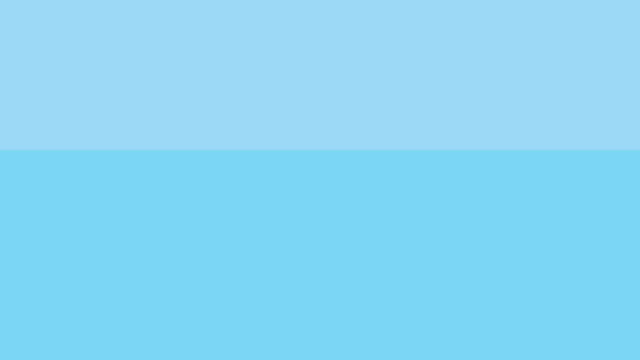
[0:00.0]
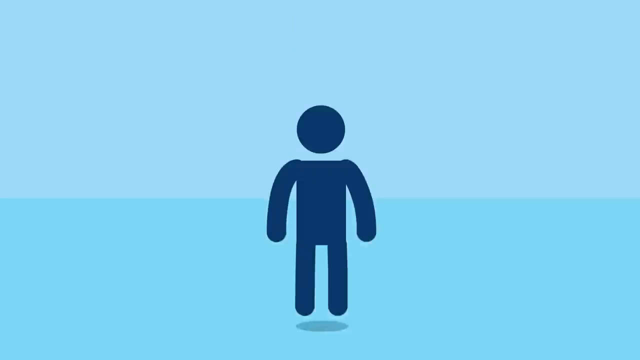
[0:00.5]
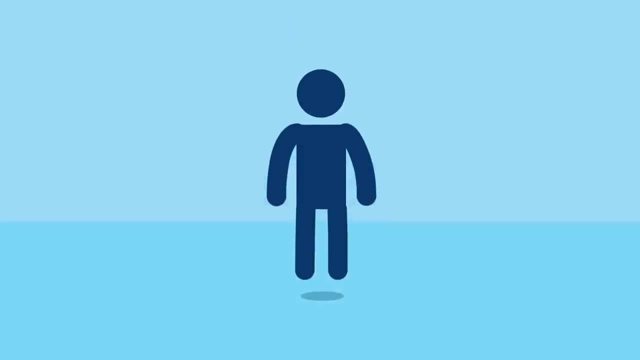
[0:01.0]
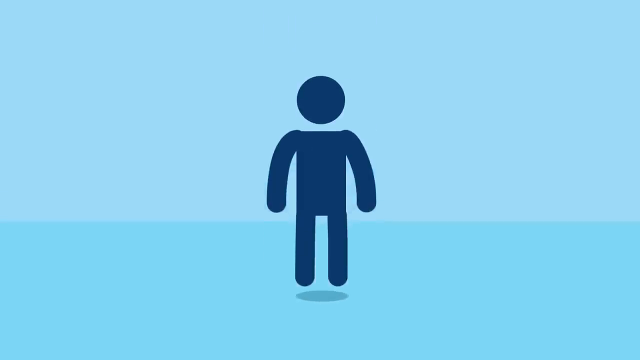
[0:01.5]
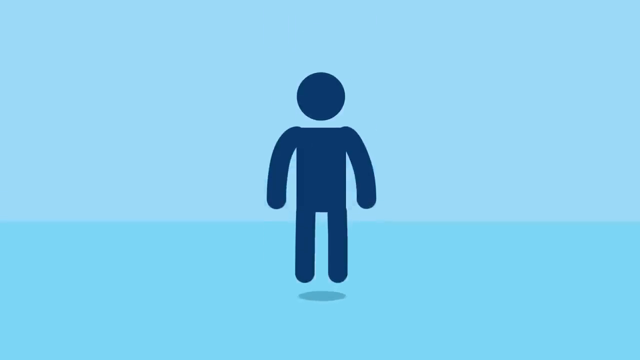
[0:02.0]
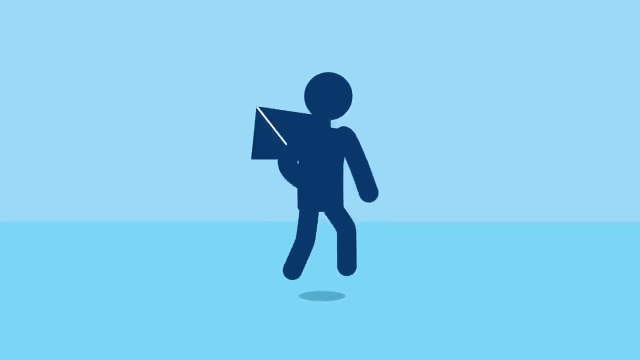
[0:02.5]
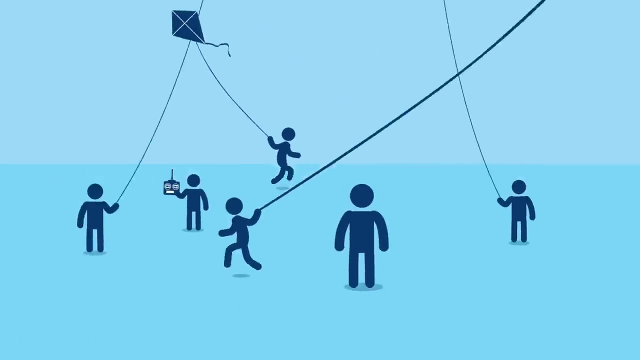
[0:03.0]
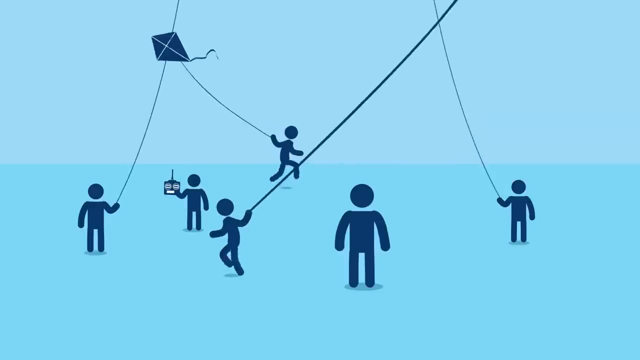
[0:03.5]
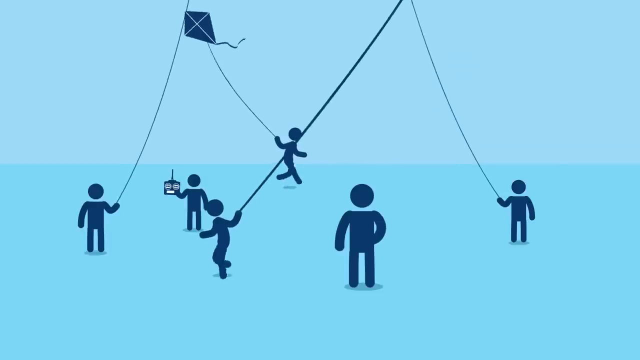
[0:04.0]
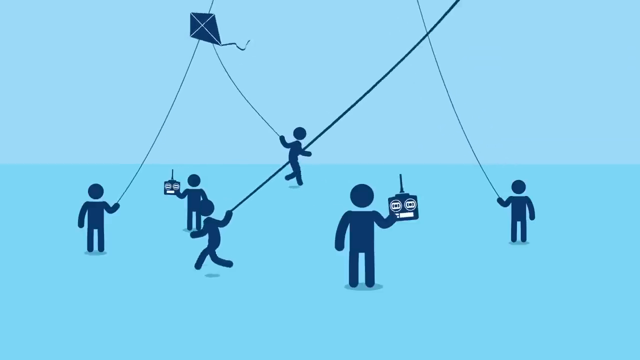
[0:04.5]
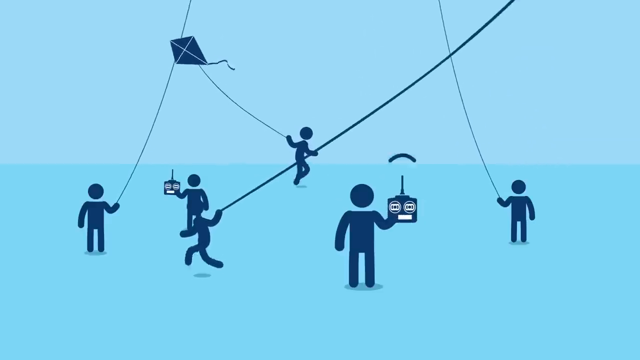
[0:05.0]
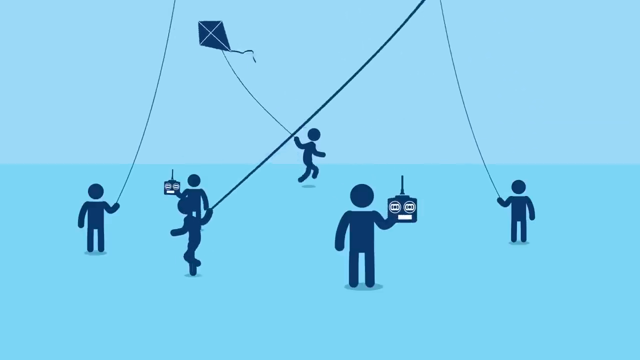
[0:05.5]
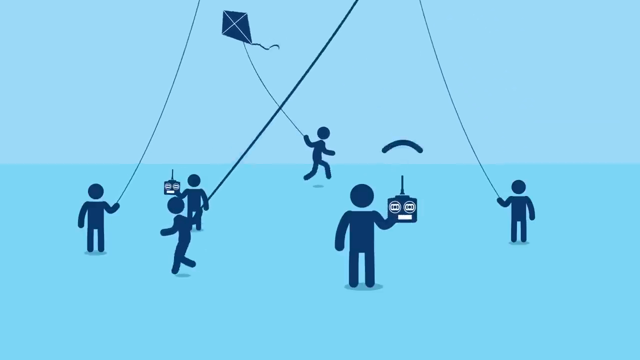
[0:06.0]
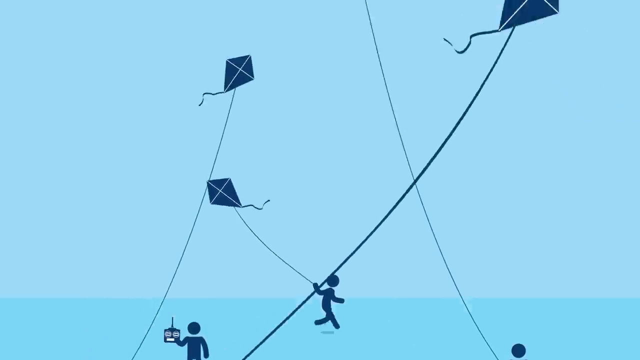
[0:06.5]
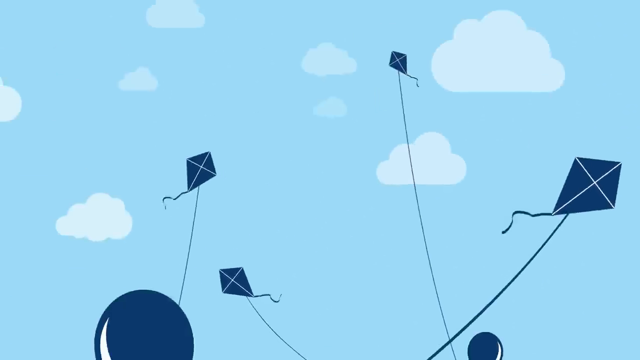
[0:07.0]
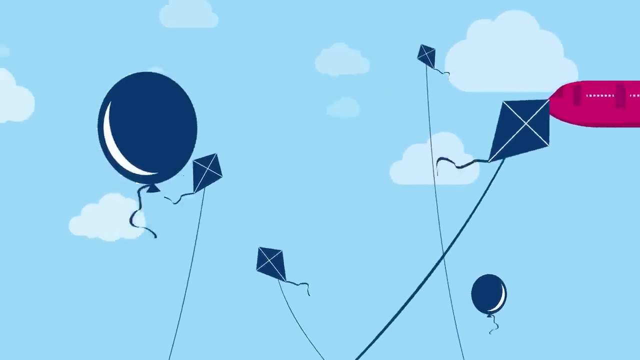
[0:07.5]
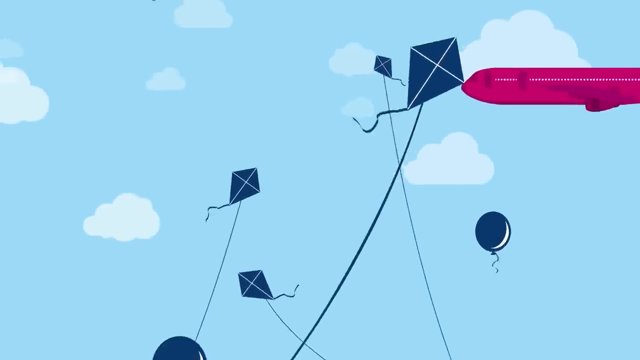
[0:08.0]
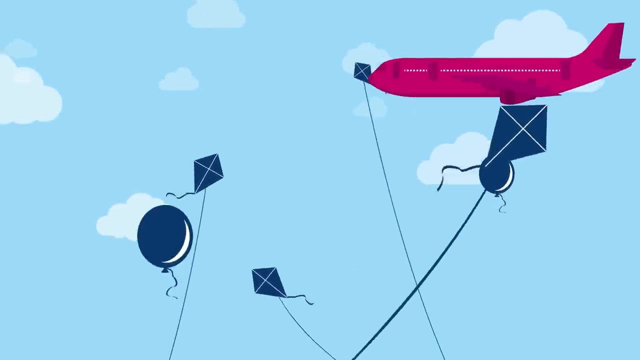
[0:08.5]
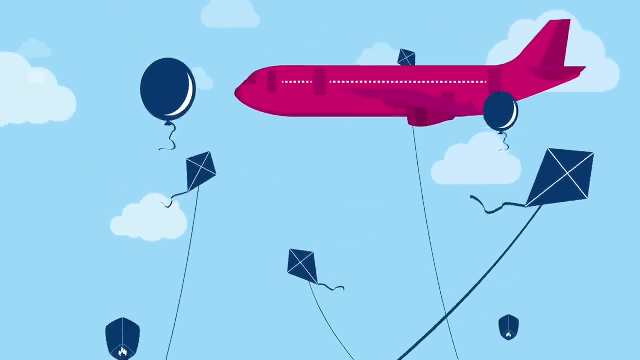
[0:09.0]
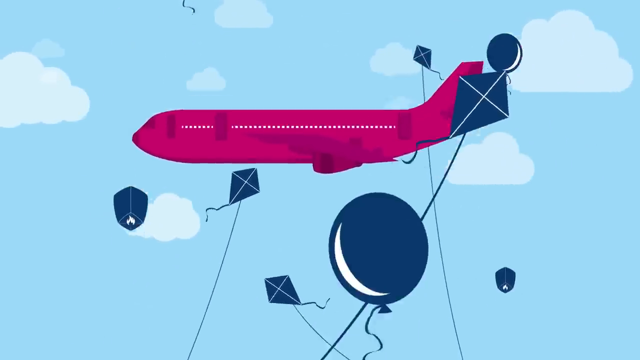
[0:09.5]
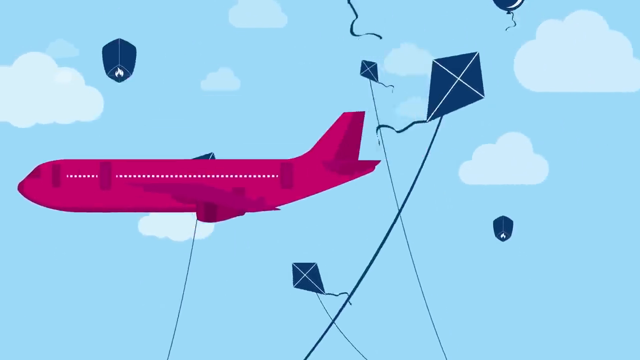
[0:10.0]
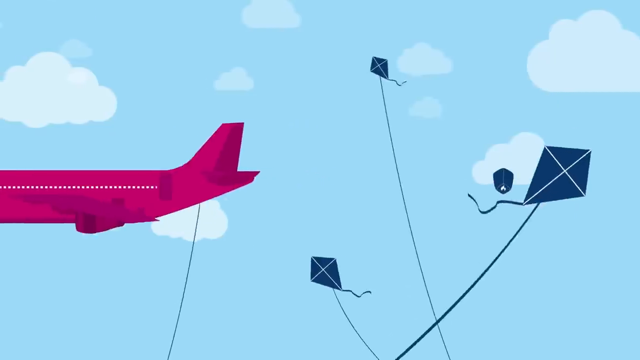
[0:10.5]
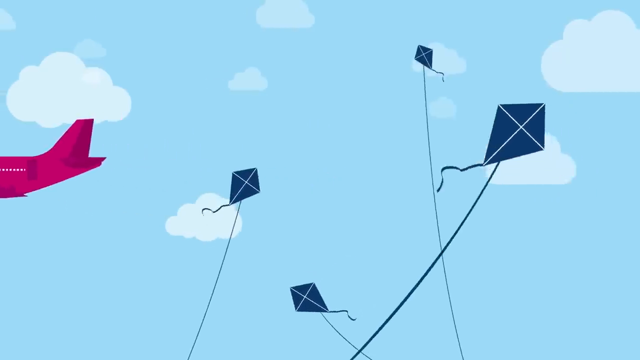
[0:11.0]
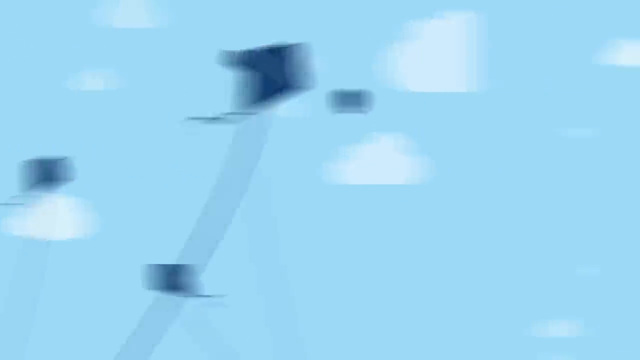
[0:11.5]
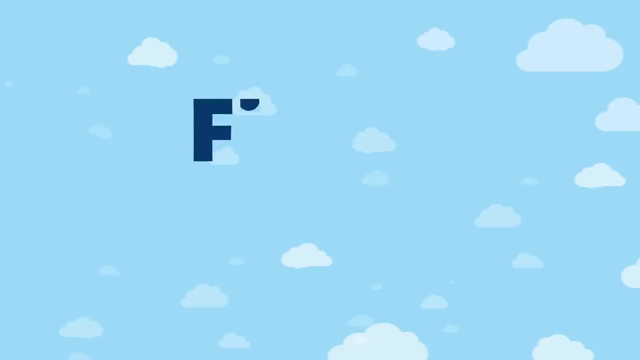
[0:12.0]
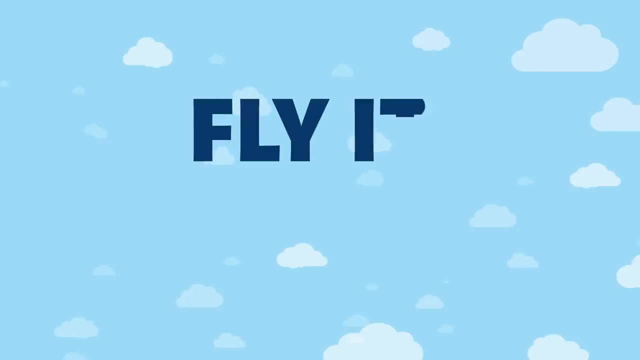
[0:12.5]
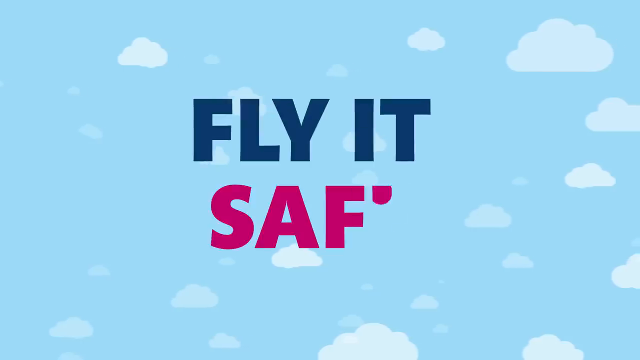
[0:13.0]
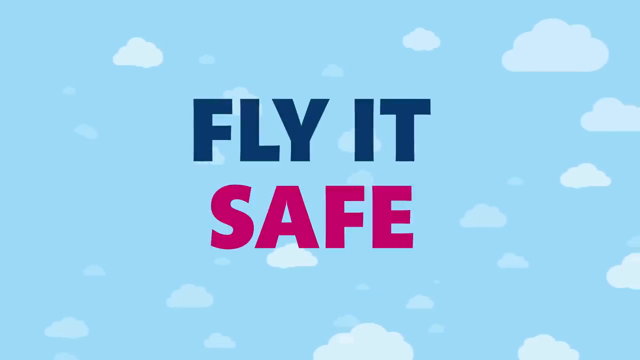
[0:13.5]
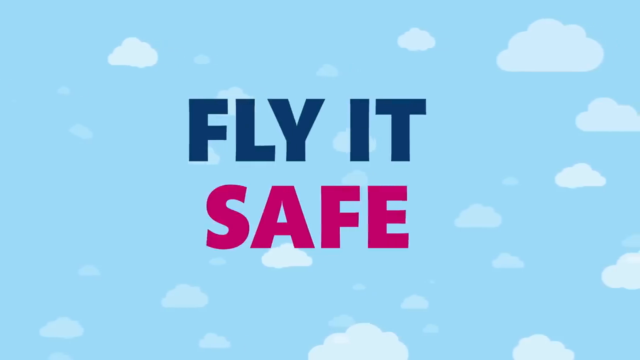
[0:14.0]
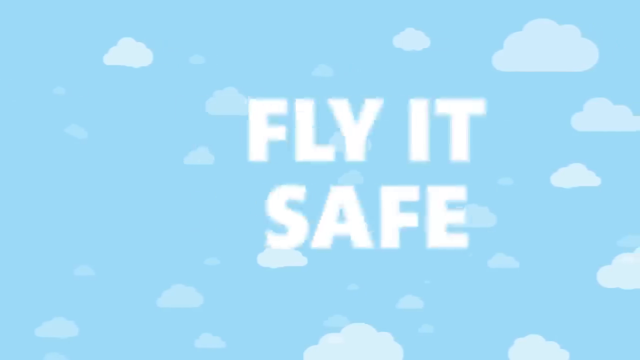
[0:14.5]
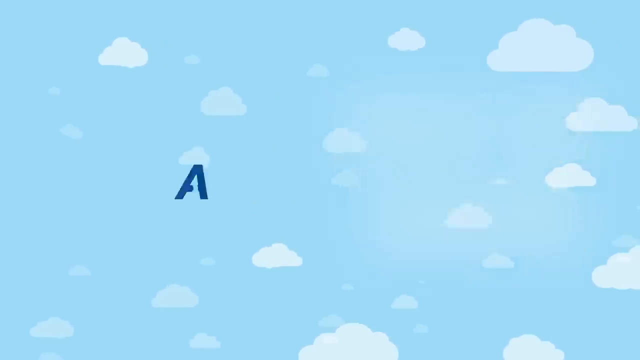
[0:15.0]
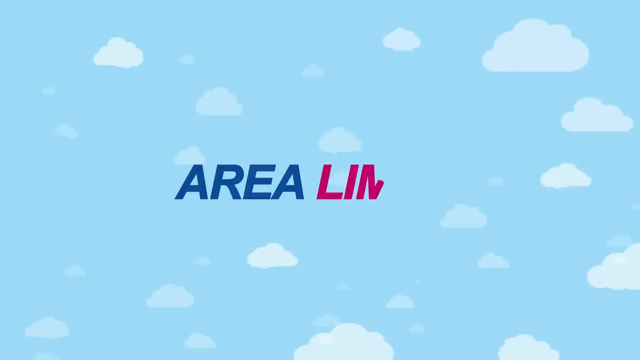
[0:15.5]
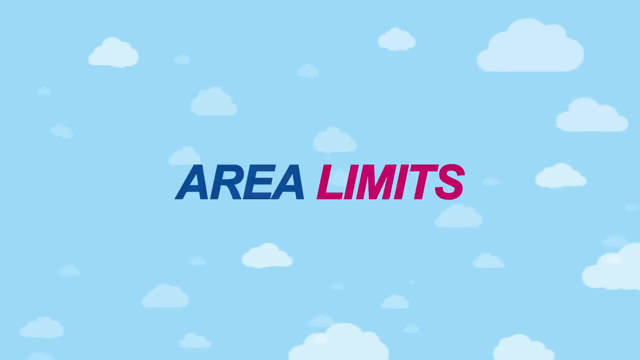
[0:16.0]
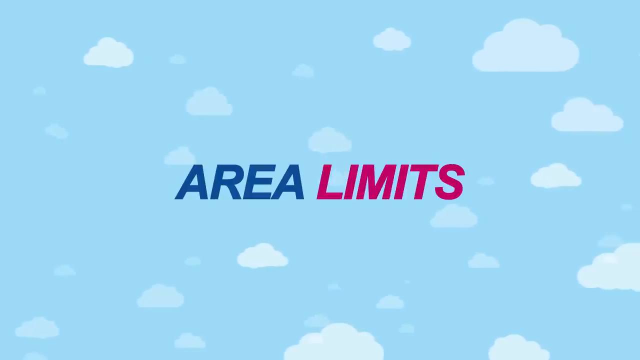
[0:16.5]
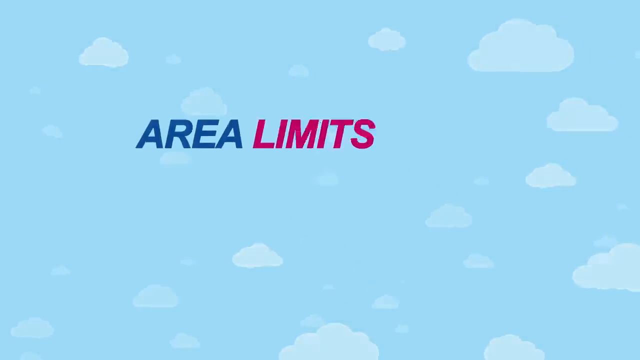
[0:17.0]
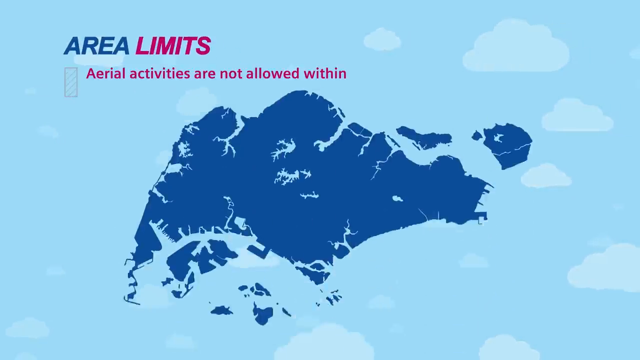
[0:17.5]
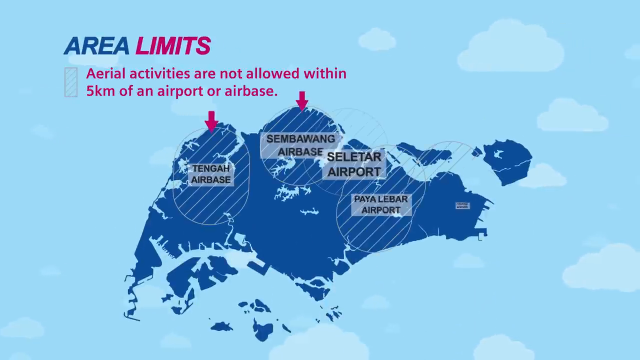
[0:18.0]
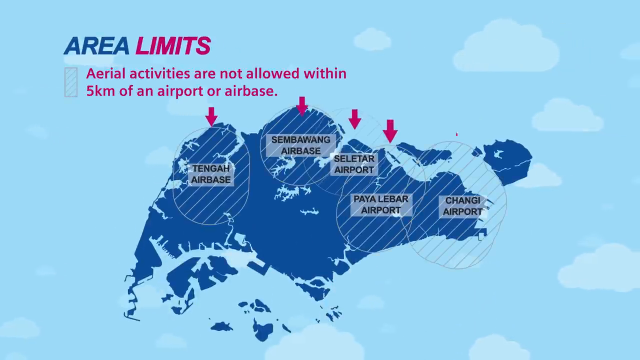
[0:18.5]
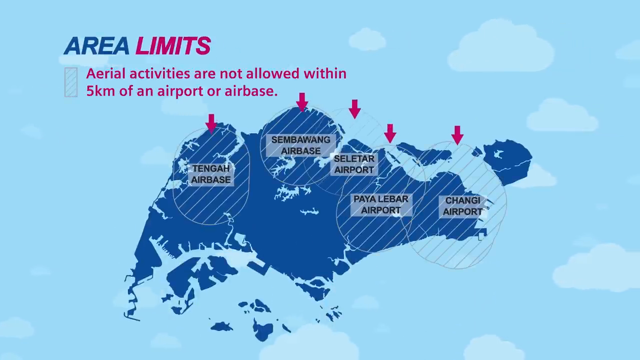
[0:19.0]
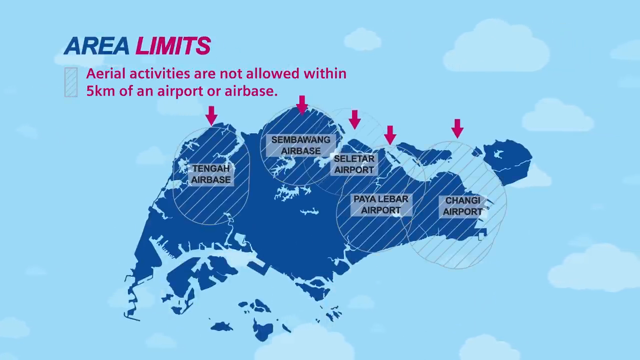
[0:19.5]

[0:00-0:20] A boy holds a kite up in the sky. At first there is just the boy, dressed in blue, and then more people appear around him, each doing their own thing; some of them seem to be holding radios in their hands, others do not. The words "fly it safe" appear, with "safe" written in pink and "fly it" in blue. While the kites are up in the sky, a pink airplane flies between them, and many balloons are also flying in the sky. The sequence then ends on a map marking some places, with text that says "area limits".